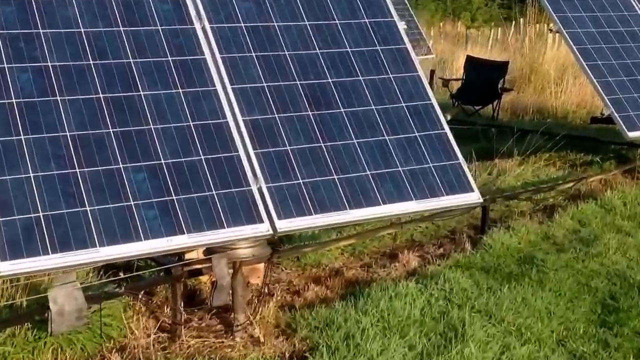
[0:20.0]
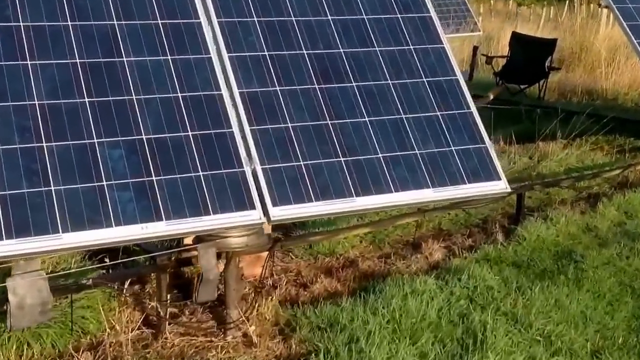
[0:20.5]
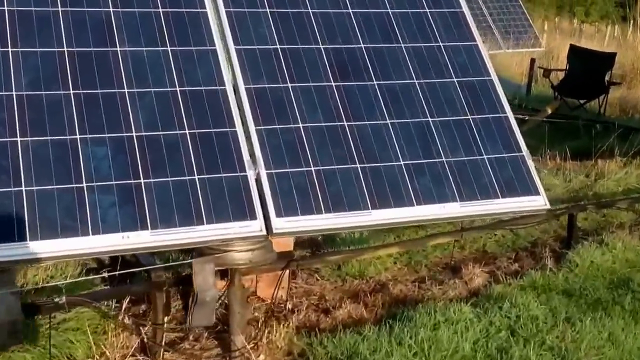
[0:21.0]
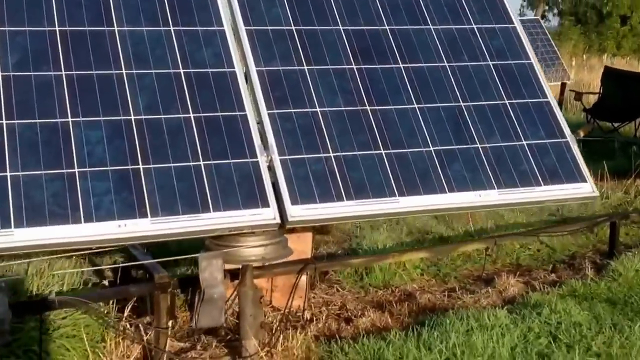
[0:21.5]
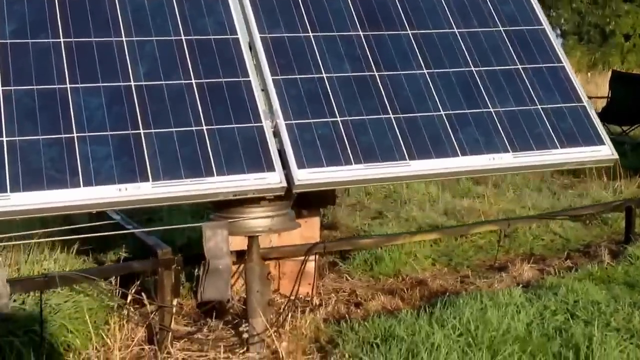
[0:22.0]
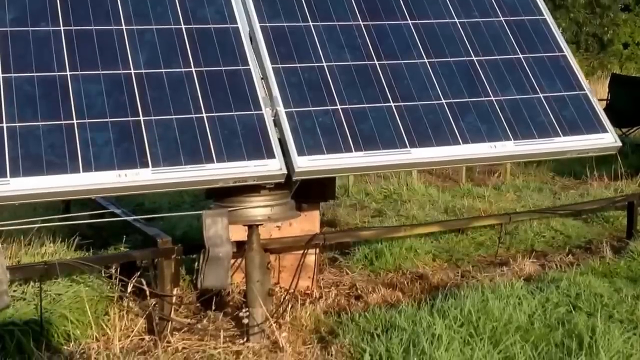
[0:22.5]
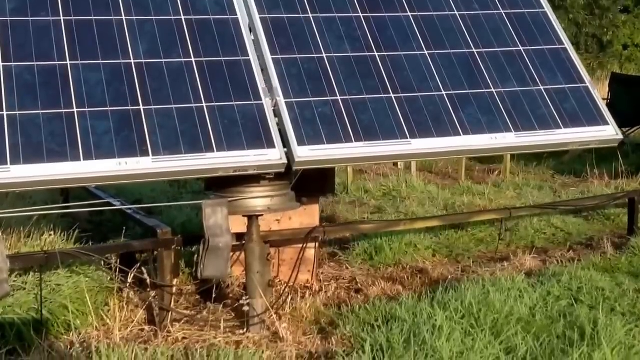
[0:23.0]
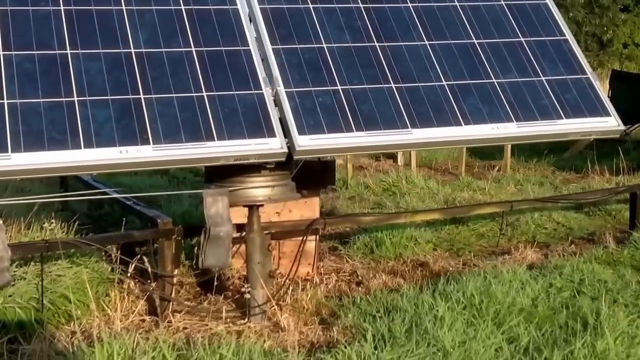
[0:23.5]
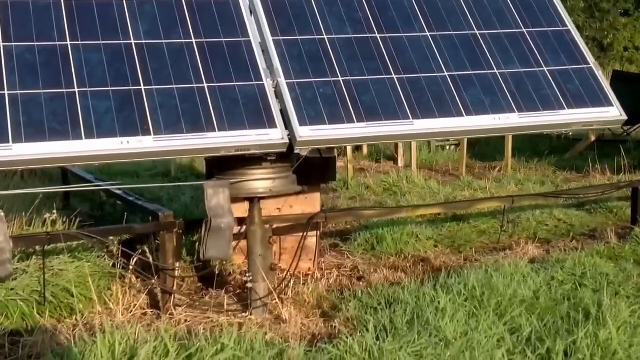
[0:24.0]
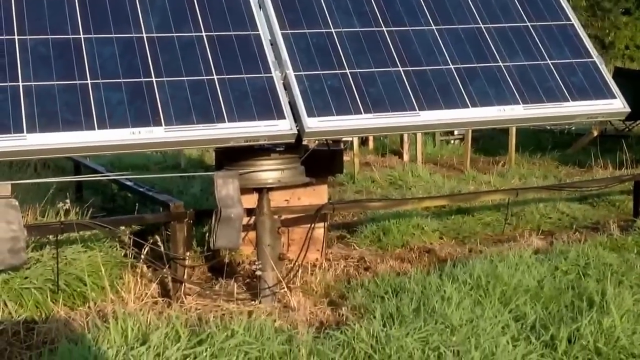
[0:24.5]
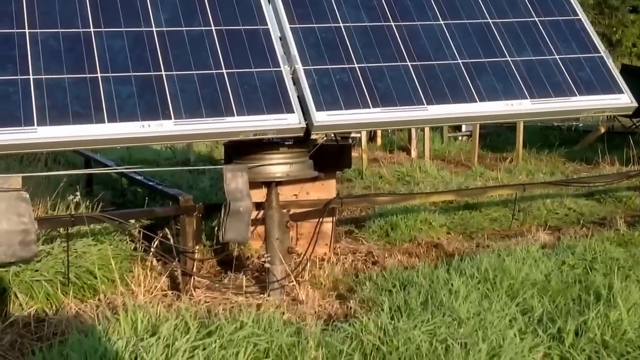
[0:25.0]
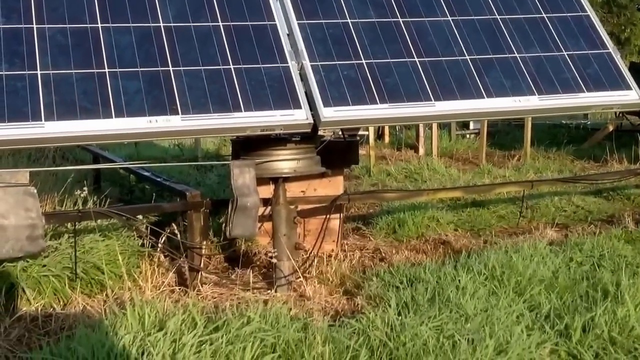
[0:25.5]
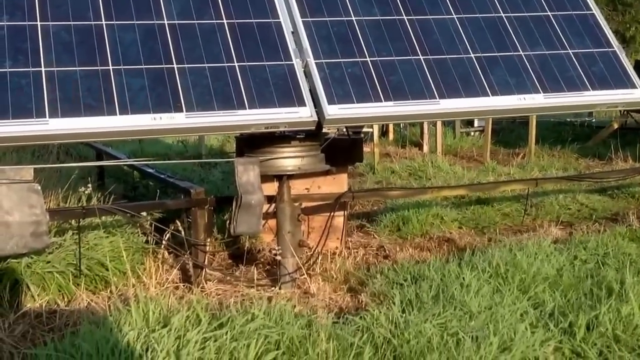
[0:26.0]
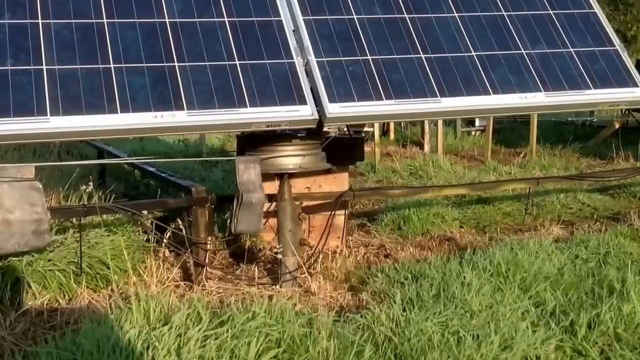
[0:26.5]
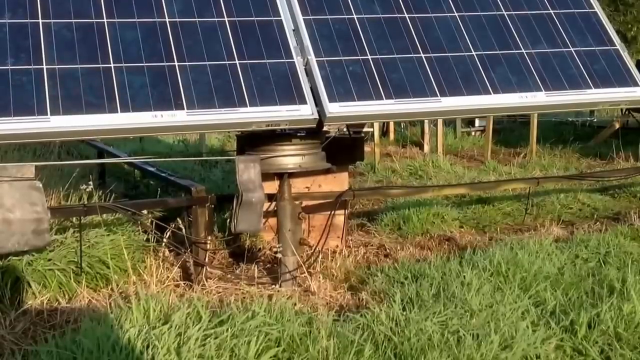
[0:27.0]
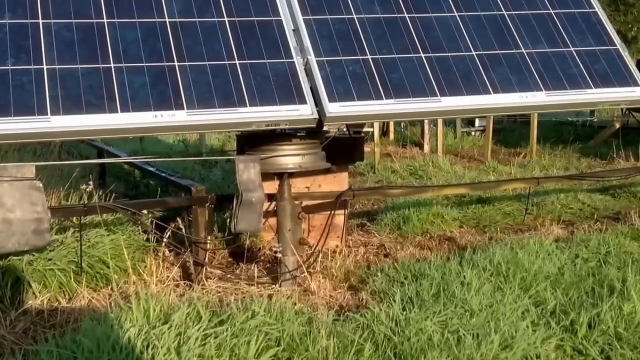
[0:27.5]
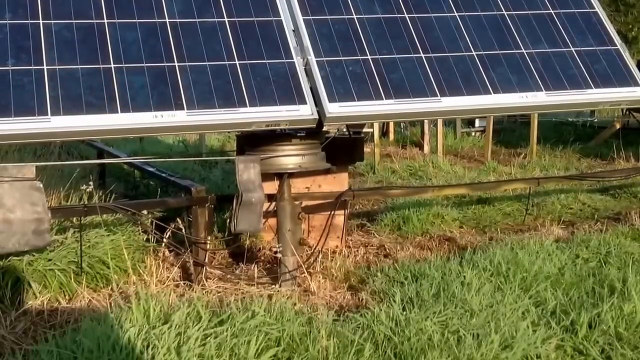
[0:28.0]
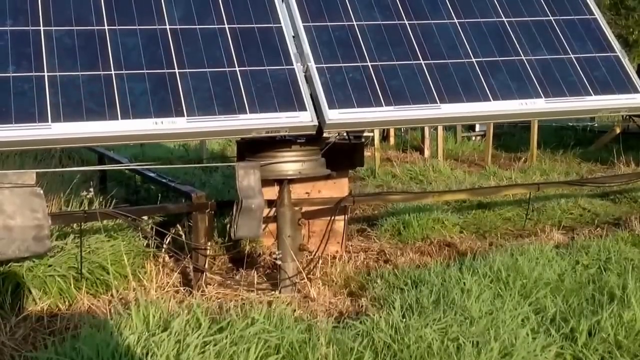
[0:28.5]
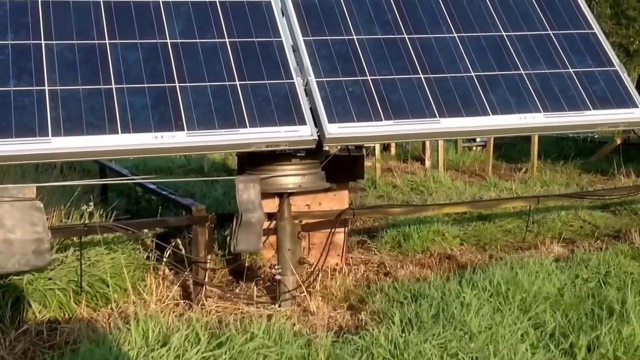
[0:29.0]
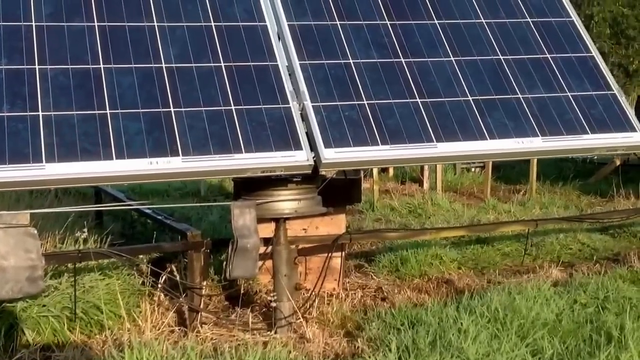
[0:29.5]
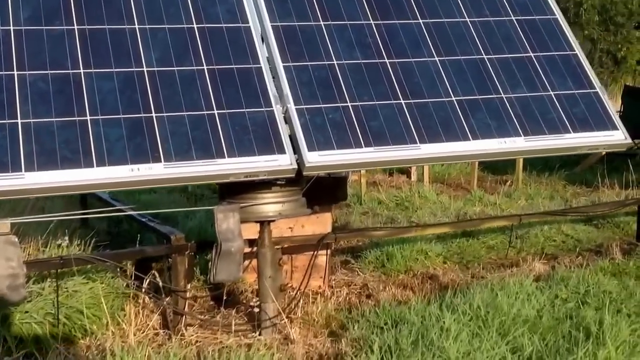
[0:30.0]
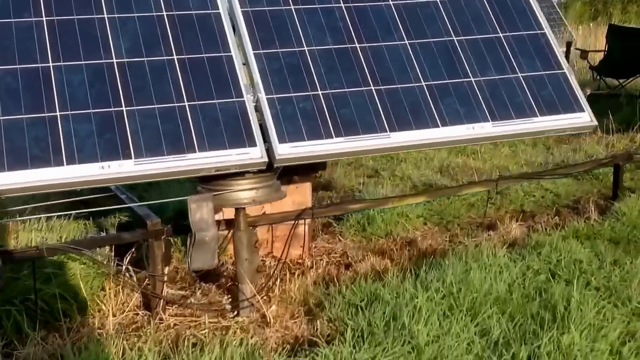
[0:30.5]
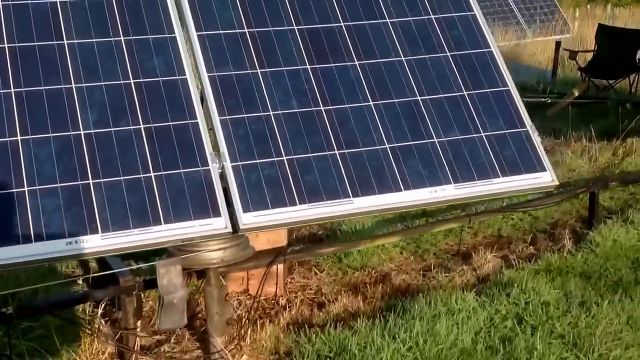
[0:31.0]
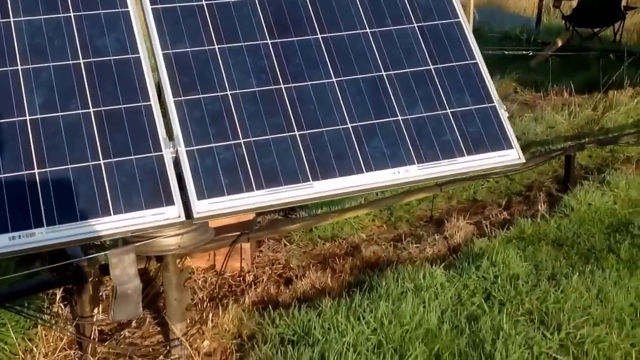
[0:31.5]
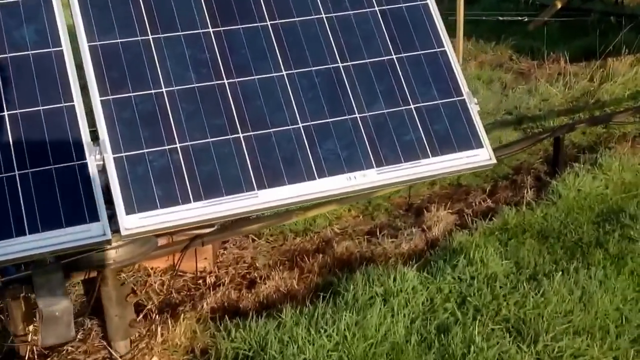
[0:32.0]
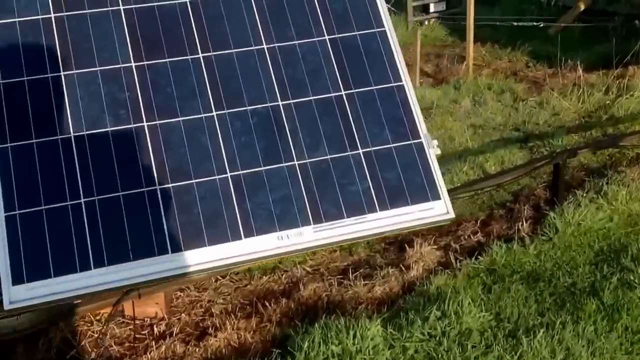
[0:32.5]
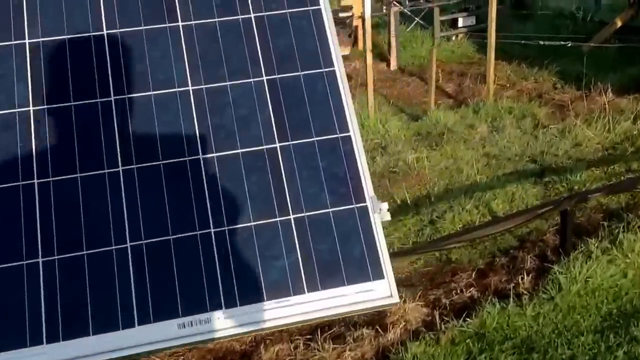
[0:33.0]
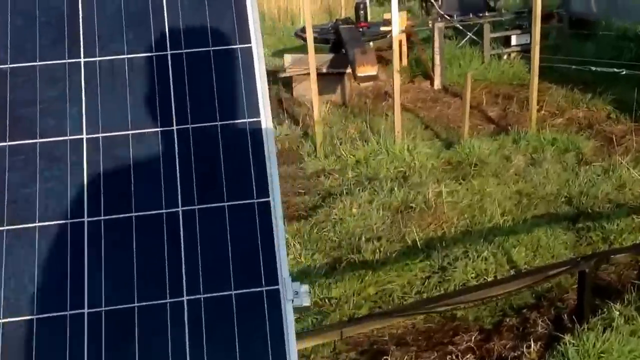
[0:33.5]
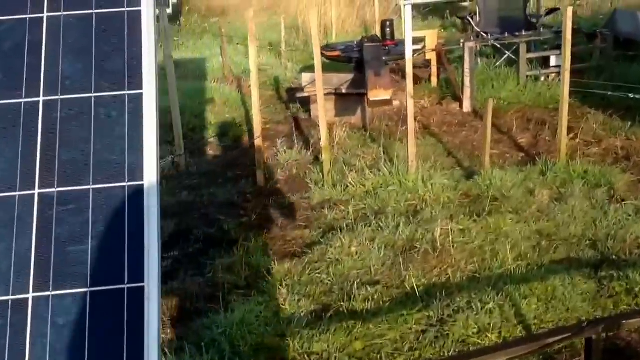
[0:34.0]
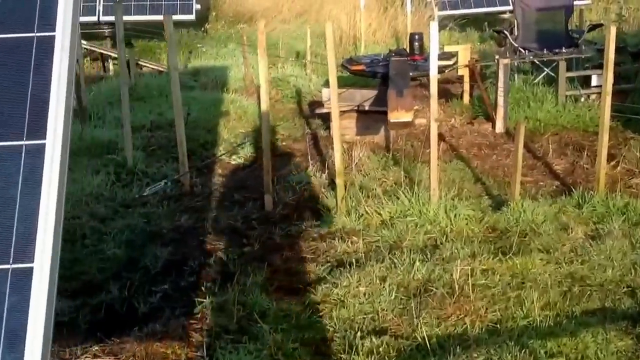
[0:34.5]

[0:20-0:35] A close-up shows one of the solar panels, and the camera zooms in to focus on the base of the panel. The solar panels have grid-like displays, with 12 squares in each row of the grid. A metal structure, the metal frame and base used to station the solar panels on the grass, is visible. The view stays on the solar panel, looking at the base. The shadow of a man travels across the grass and the solar panel; it is the shadow of the man filming the video. His outline and the position of his hands are visible, and he appears to be holding a camera or a cell phone in his hands as he records.